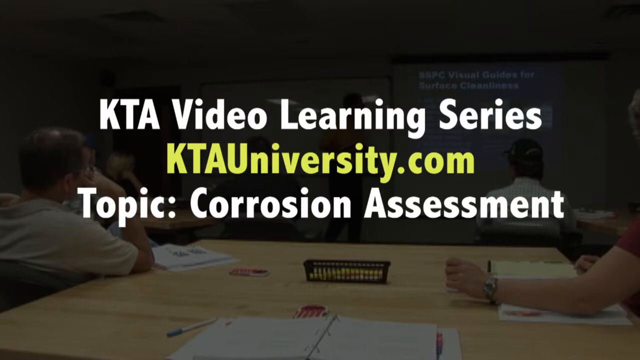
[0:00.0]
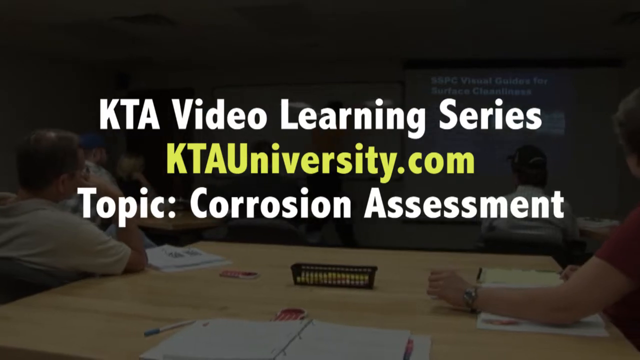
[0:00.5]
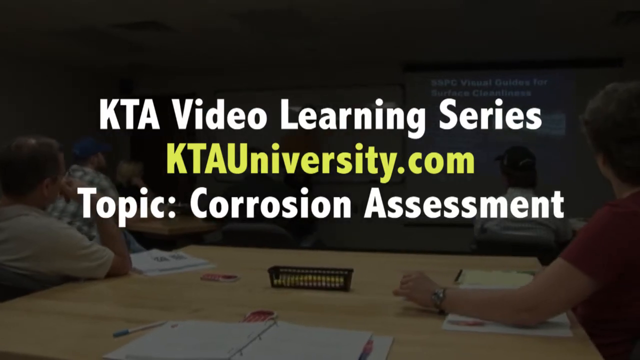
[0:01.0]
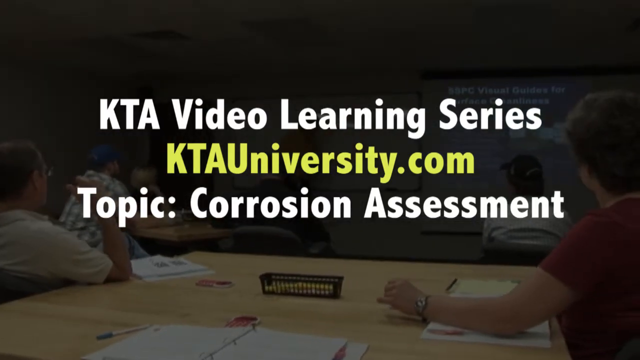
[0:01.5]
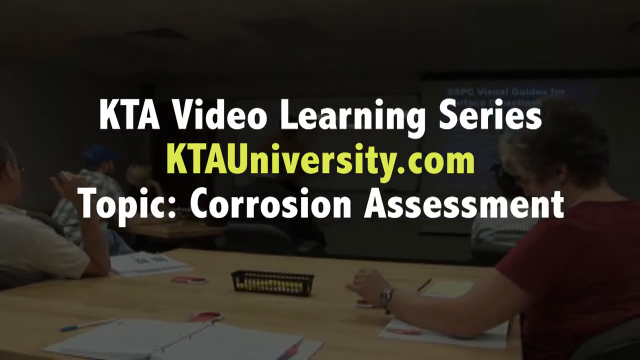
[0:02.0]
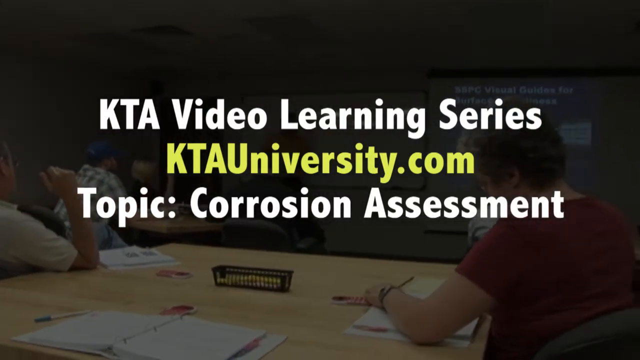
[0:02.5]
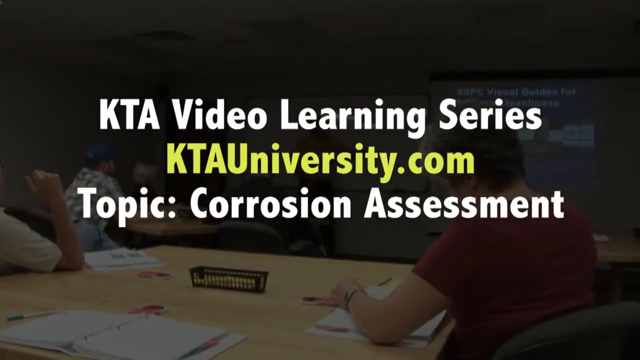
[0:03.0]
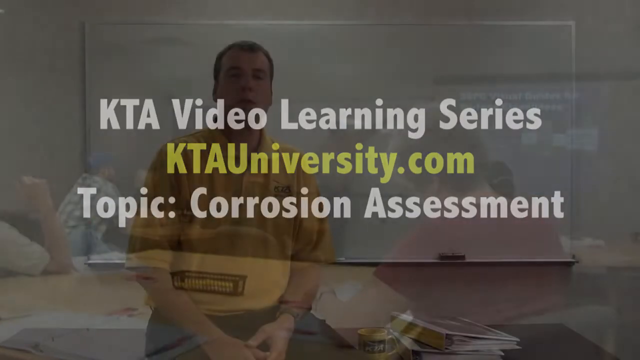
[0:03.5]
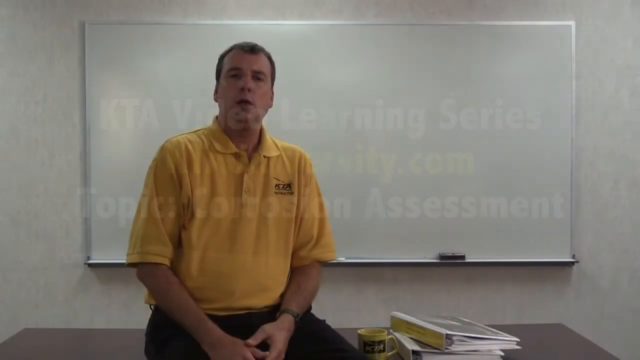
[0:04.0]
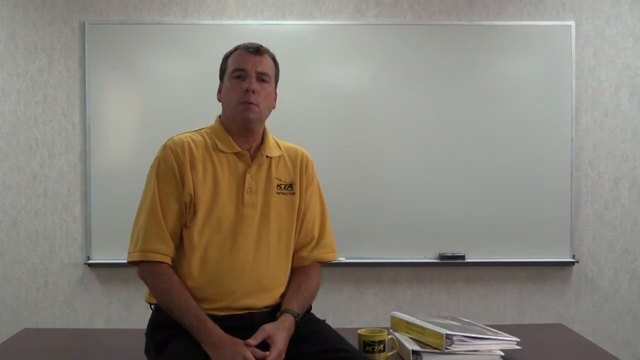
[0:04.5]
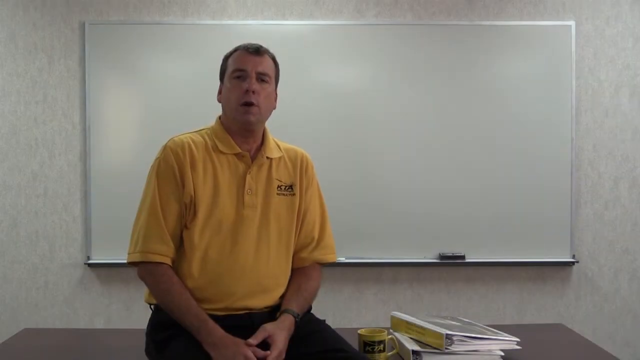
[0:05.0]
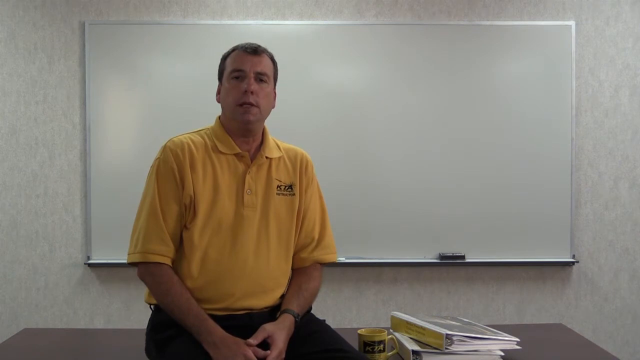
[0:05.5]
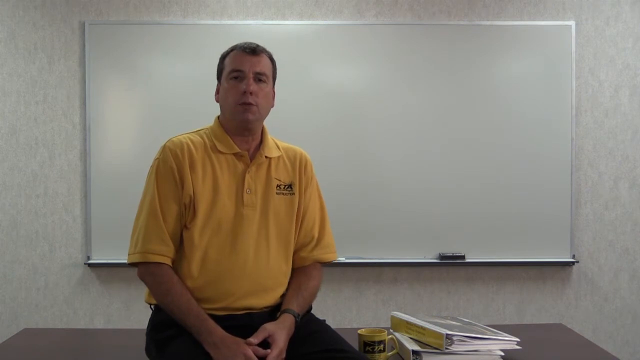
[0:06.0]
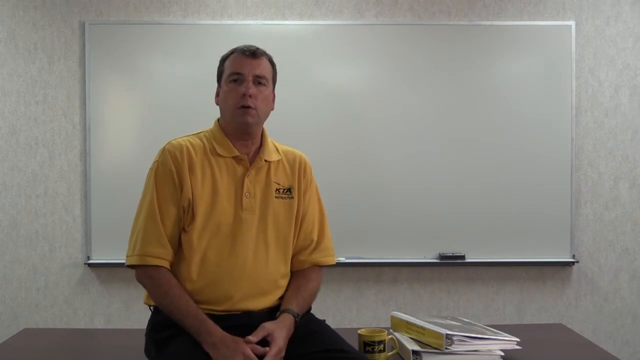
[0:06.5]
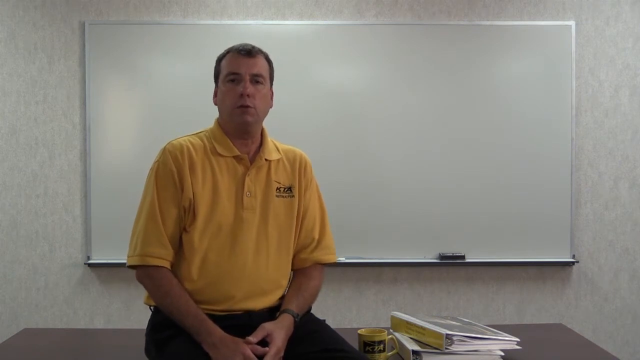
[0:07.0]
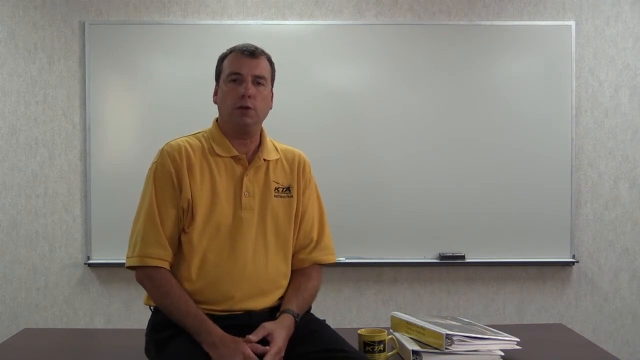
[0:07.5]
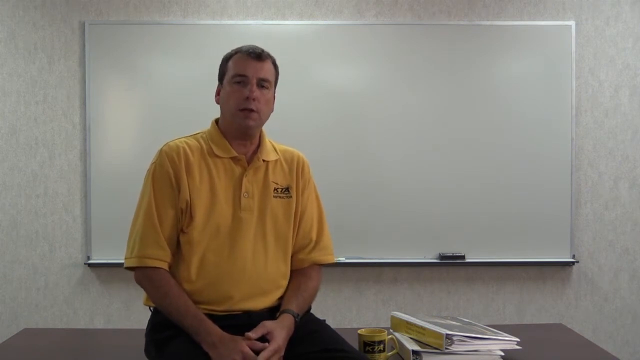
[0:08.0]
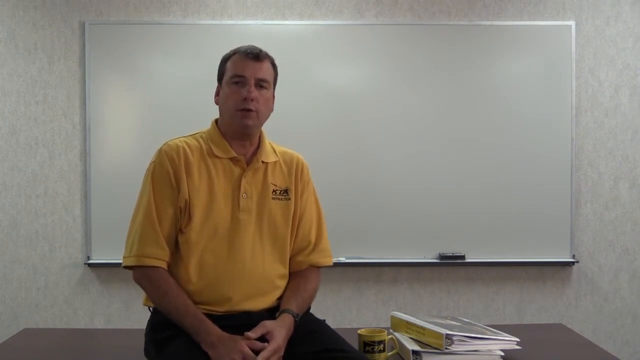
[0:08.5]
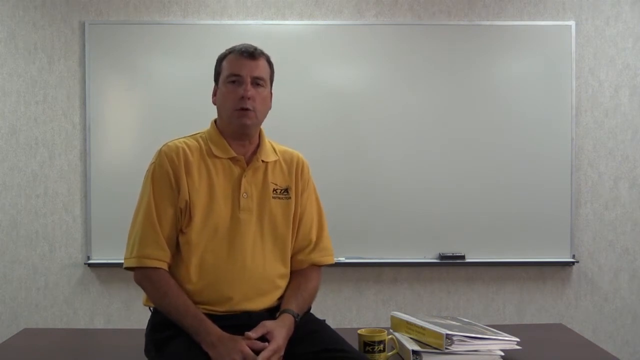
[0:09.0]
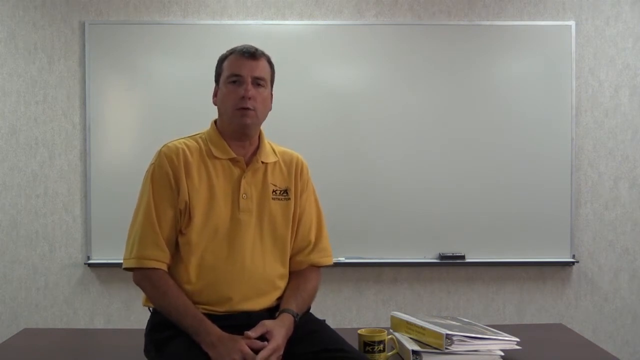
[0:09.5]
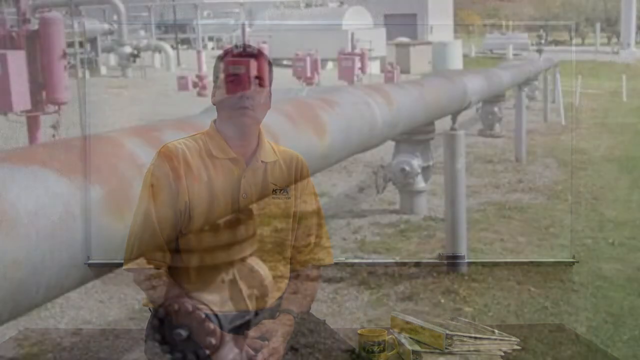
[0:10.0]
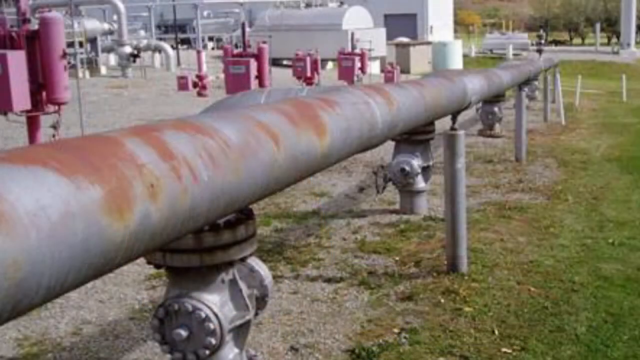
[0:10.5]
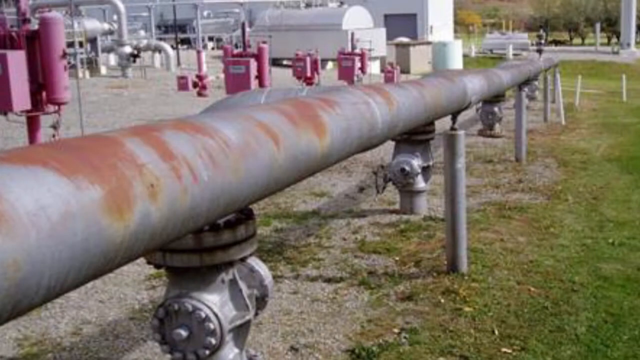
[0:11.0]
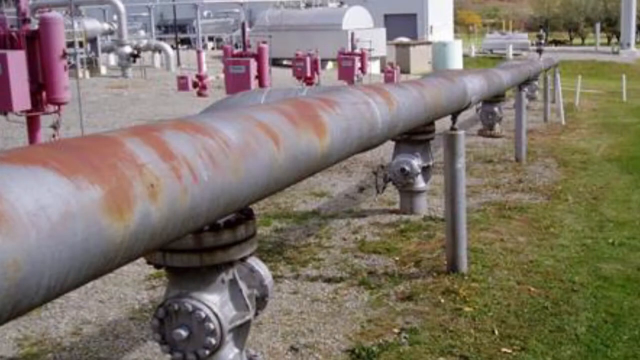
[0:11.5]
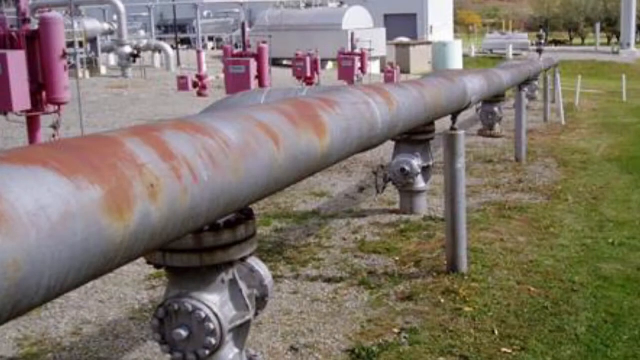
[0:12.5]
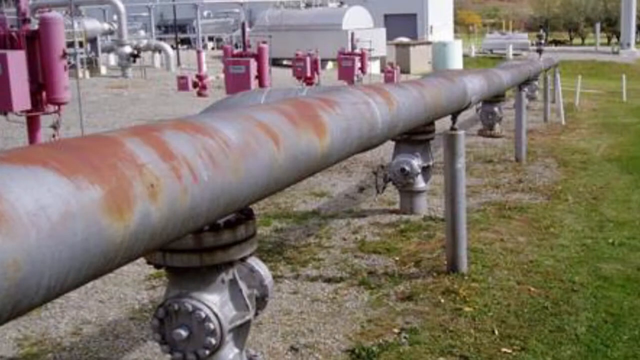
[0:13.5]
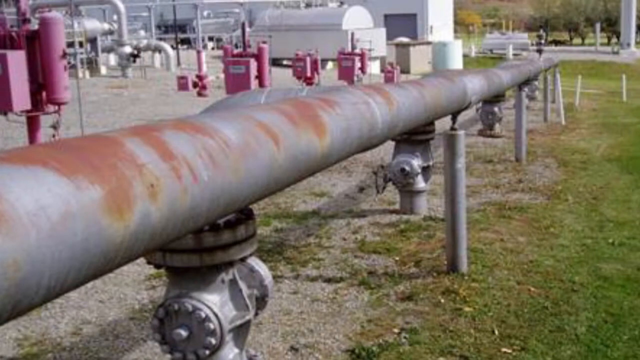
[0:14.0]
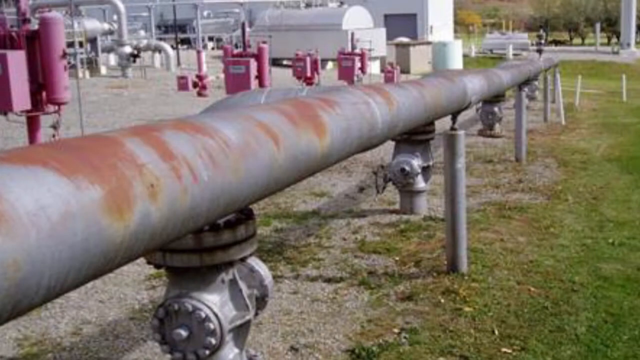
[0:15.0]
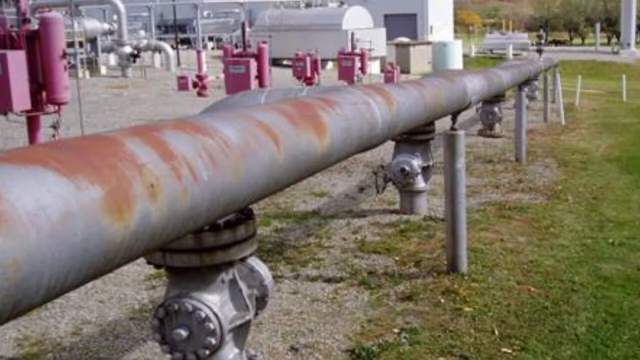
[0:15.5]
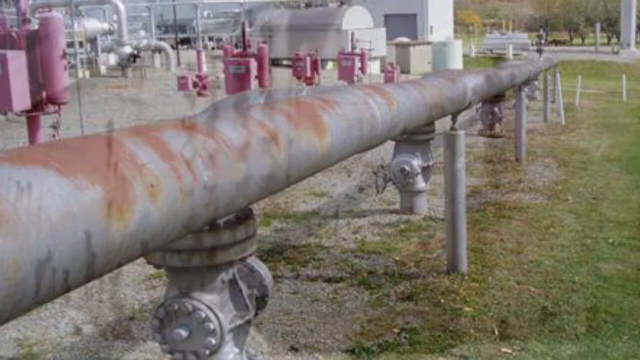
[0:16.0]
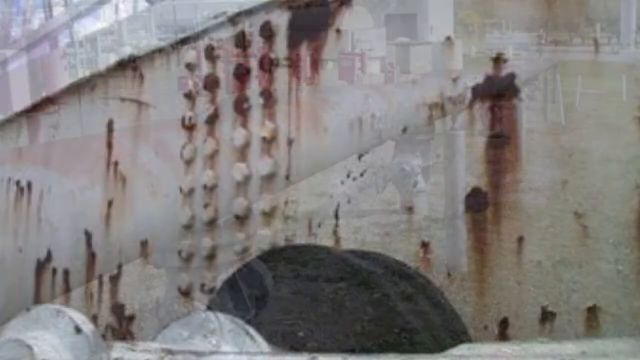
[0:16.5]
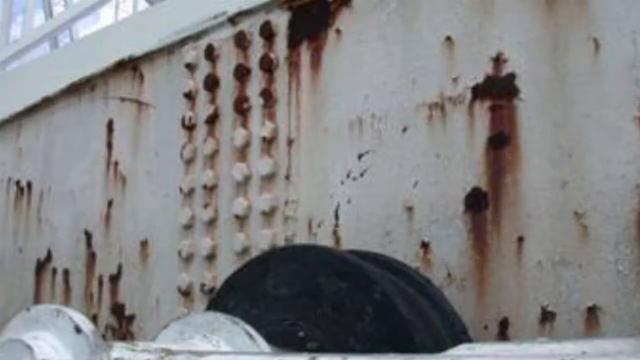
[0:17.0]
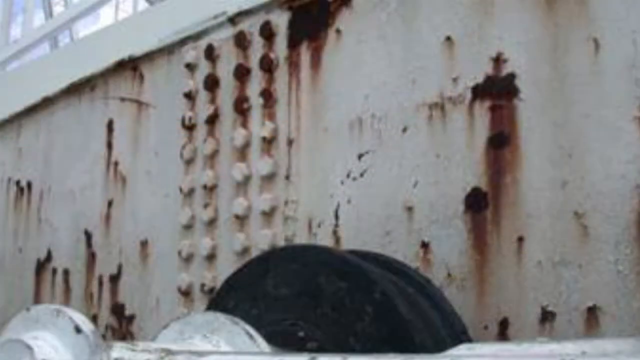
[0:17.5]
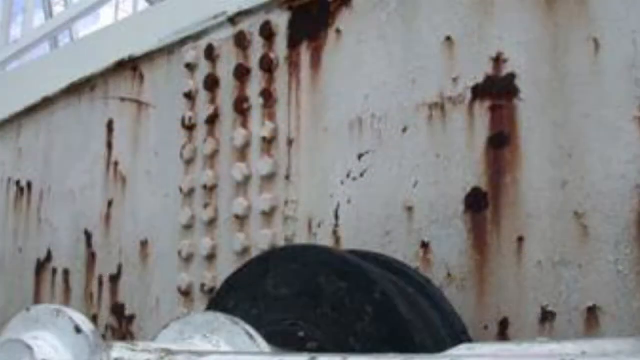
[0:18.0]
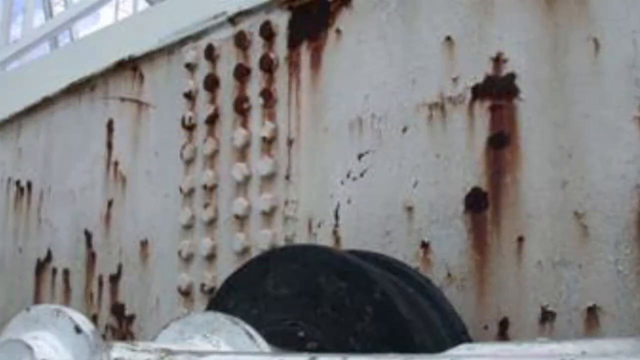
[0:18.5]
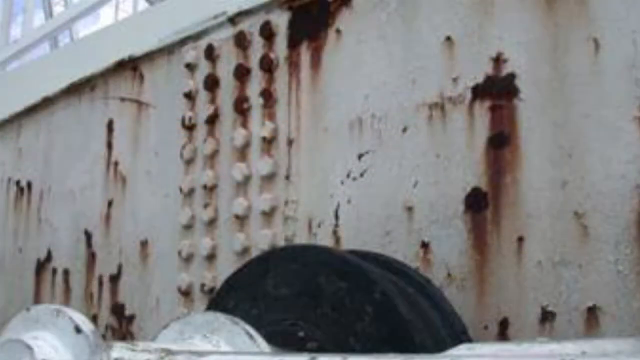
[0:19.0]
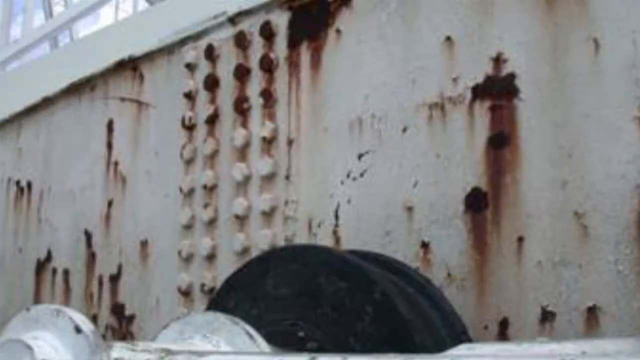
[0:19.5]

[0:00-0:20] The video is part of a KPF video learning series from KTAUniversity.com, and its main topic is corrosion assessment. A lecturer in a yellow t-shirt explains corrosion and its different types. Different metals that have corroded and rusted are shown. There are students and a table, with a mug and notes on the table, and a whiteboard behind.